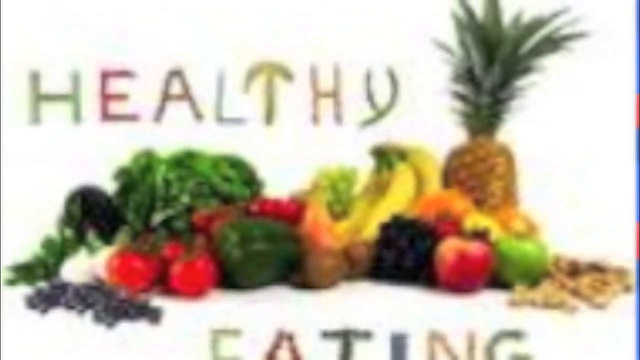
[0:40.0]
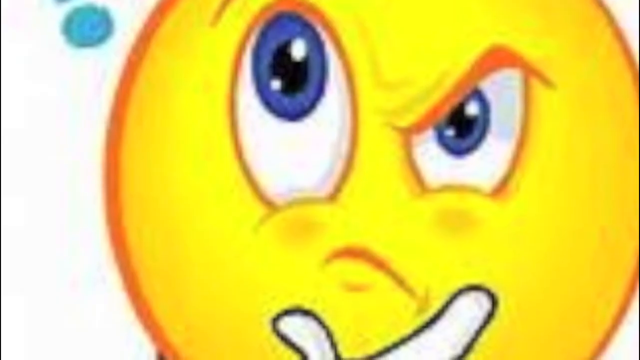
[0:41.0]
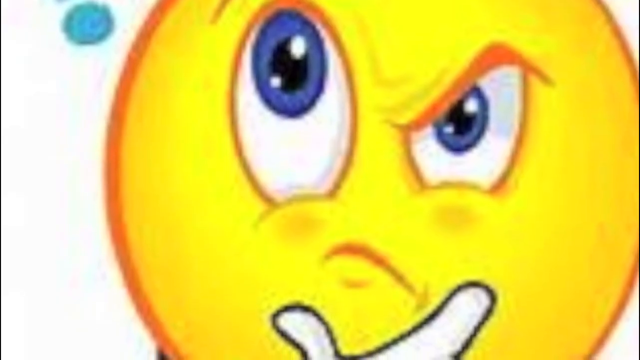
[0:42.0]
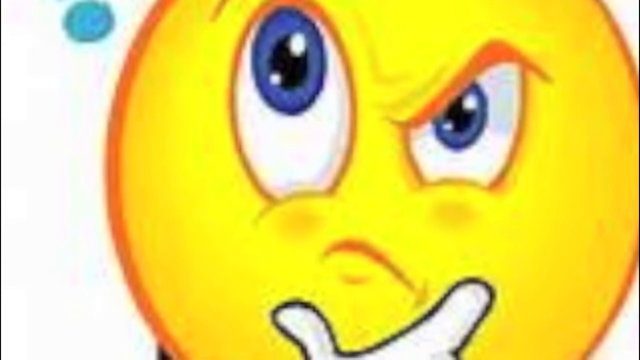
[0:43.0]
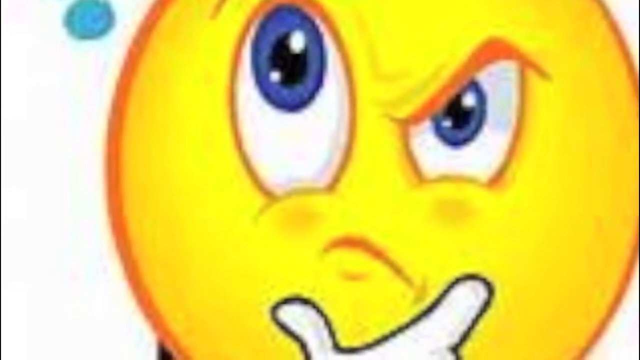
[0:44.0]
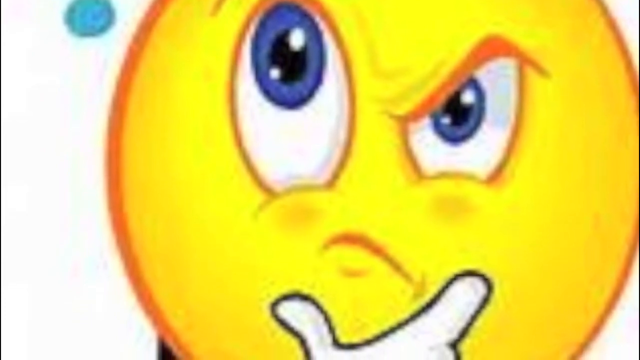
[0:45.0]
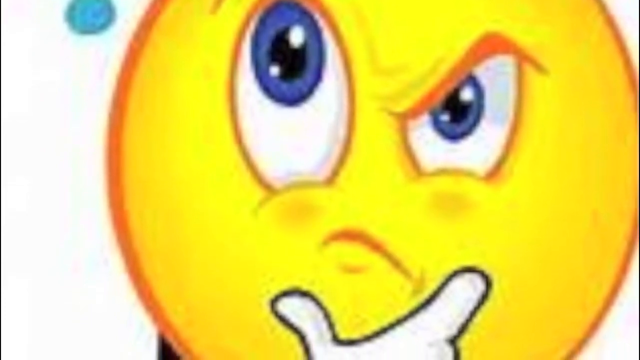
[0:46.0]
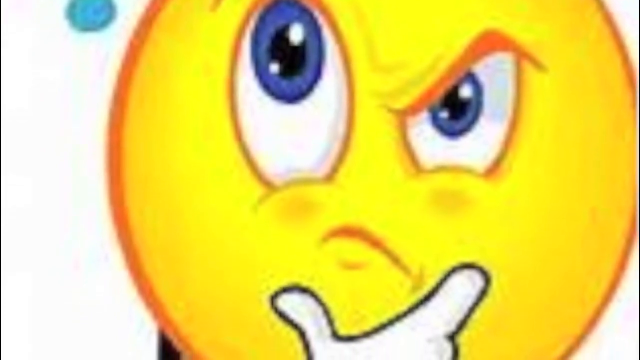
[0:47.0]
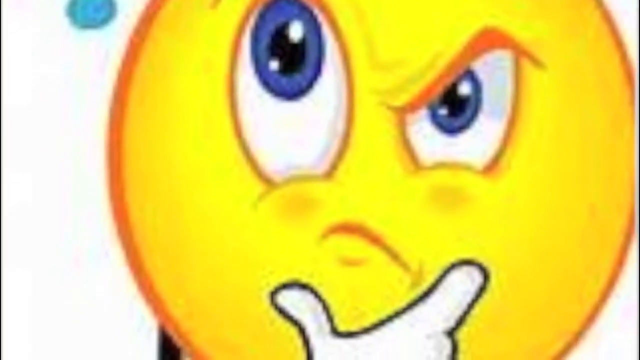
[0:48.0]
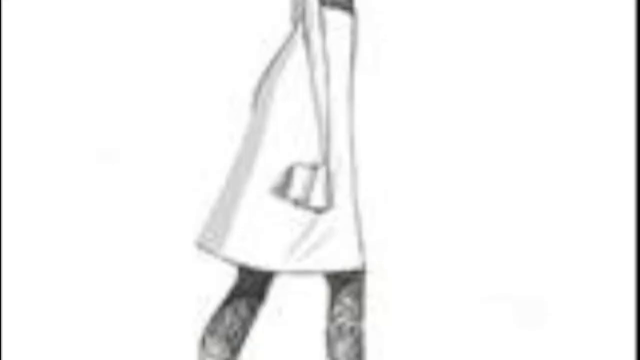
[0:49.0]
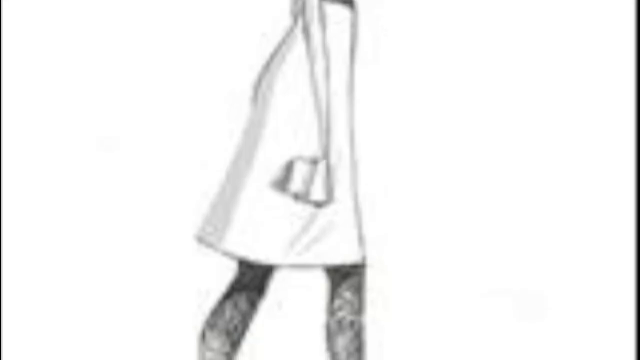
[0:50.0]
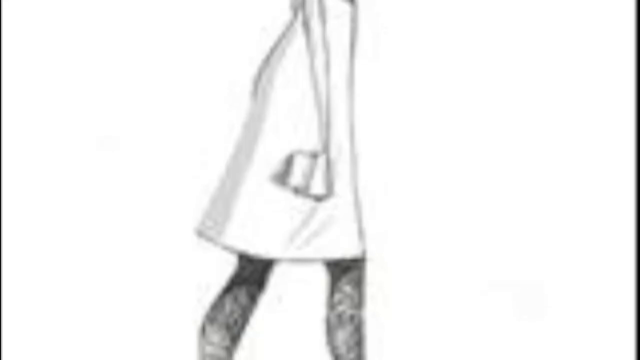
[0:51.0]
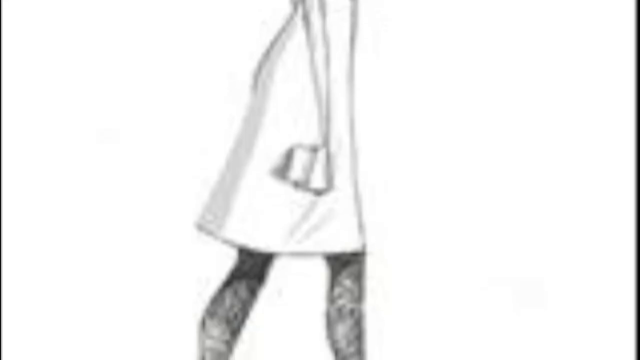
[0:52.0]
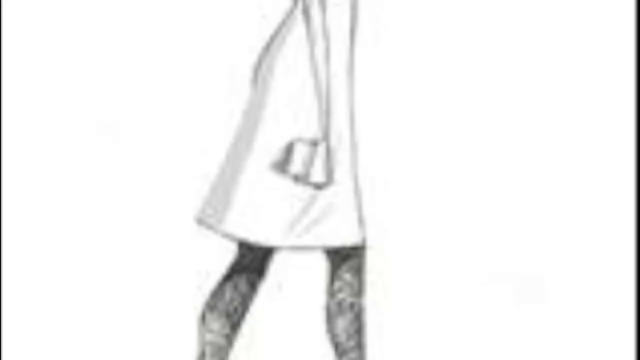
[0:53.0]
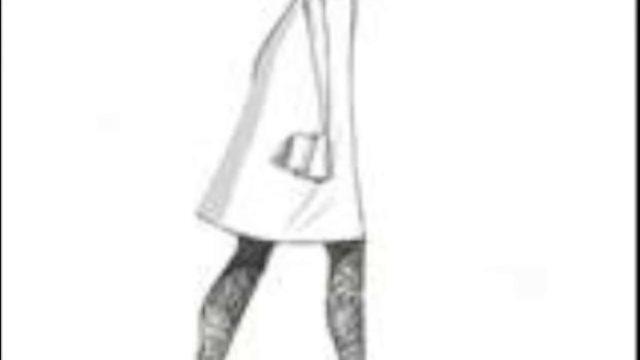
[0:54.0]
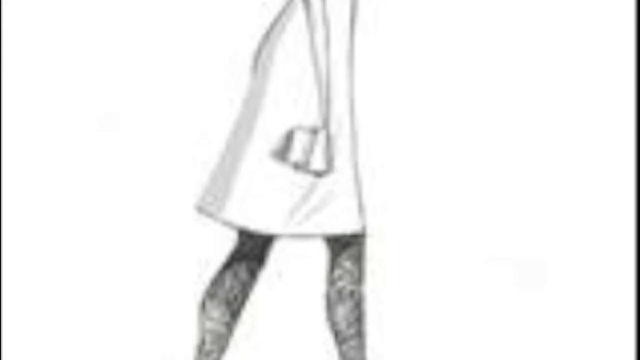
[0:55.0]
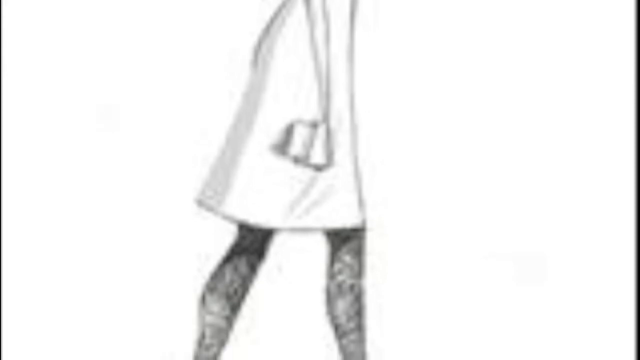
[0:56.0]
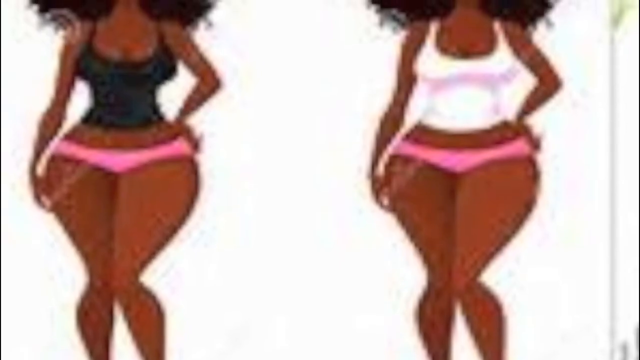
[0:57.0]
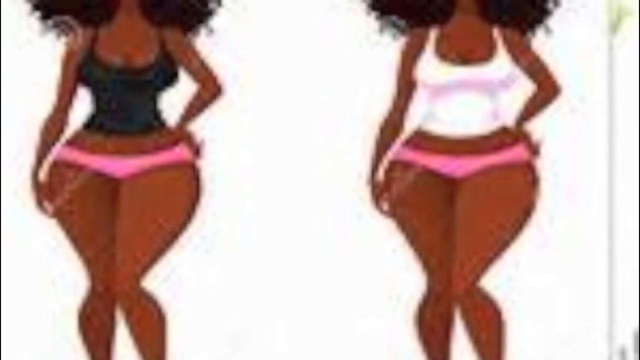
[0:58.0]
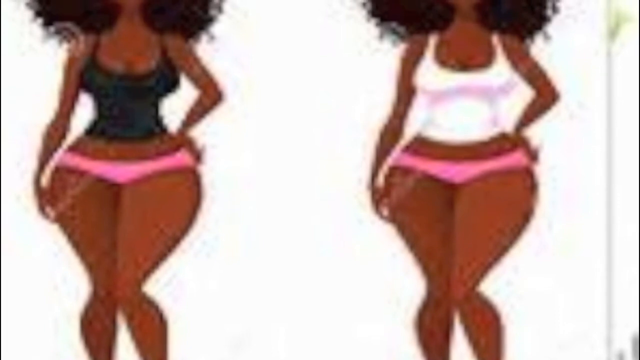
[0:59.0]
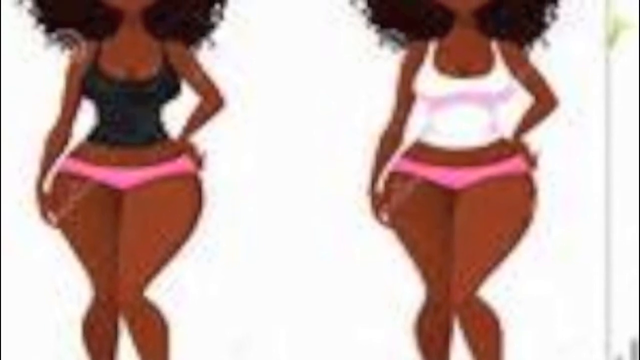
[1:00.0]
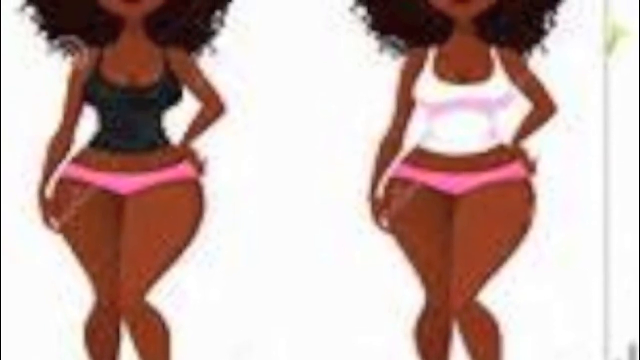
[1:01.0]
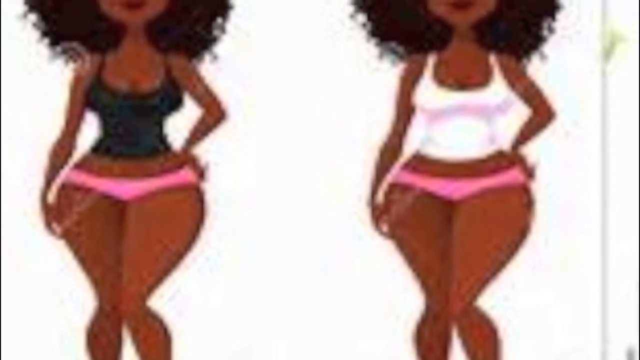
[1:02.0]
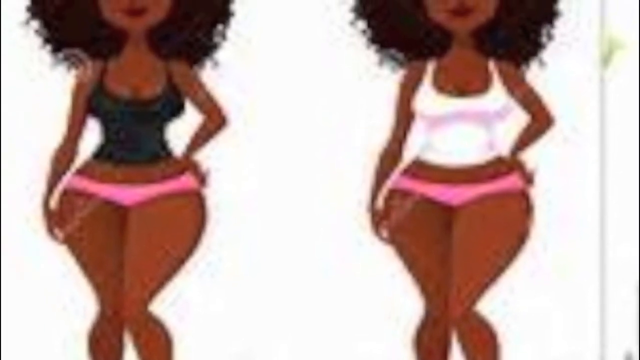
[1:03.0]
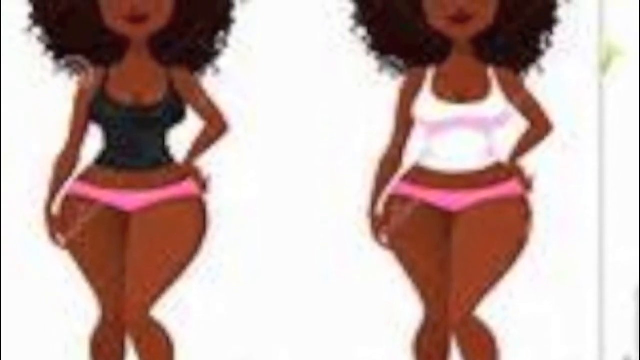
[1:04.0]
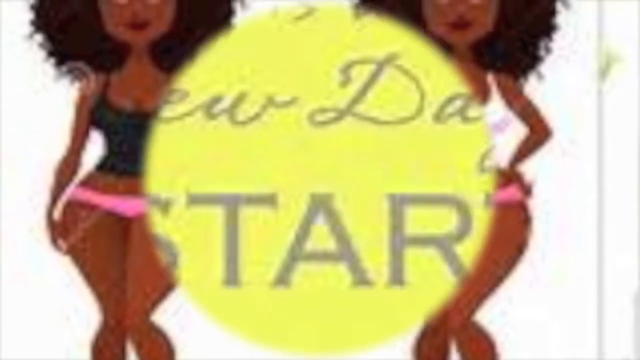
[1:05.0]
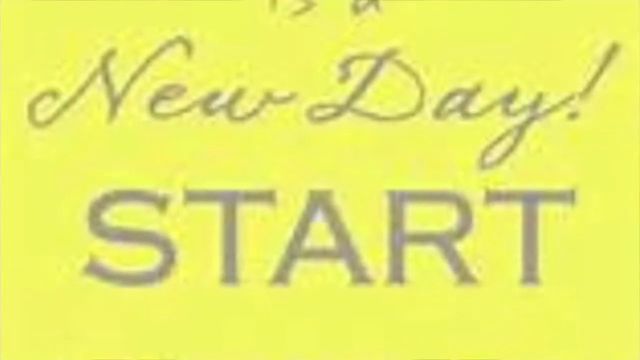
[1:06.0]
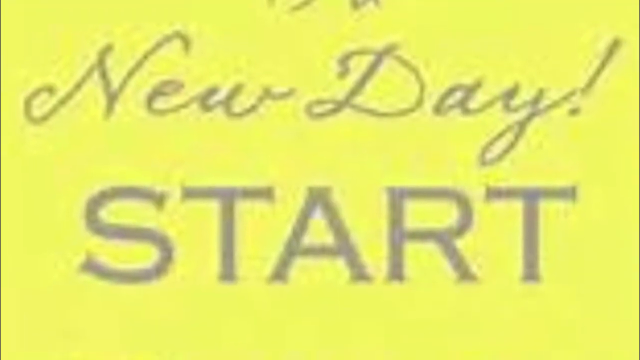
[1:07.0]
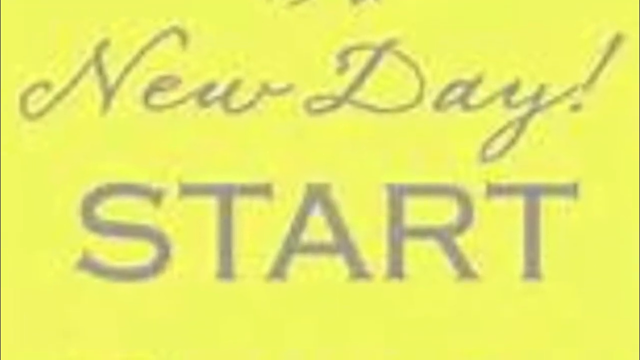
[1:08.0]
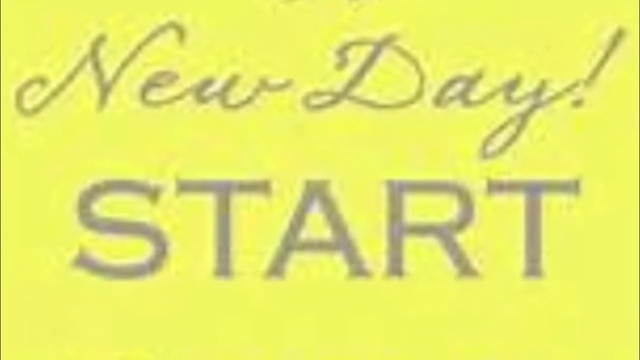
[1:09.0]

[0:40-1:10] The word "healthy" is on the screen right above a big bunch of arranged fruits and vegetables. Next, a cartoon-like smiley-face circle appears, looking a little skeptical and seemingly rubbing its chin. A black-and-white illustration of a slender woman in a skirt follows, then a color illustration of two nearly identical, very curvaceous women who both appear to be African-American. Both wear pink panties; the one on the left wears a black tank top and the one on the right a white tank top. Then a screen reads "new day!" and "start": "new day" is in a script font and "start" is in an all-caps serif font, possibly Copperplate. The text is gray on a bright yellow, lime-ish green background.